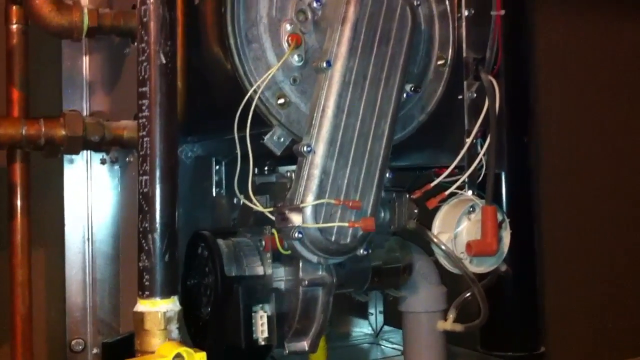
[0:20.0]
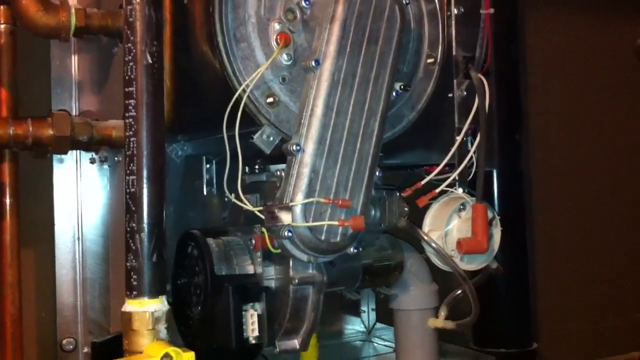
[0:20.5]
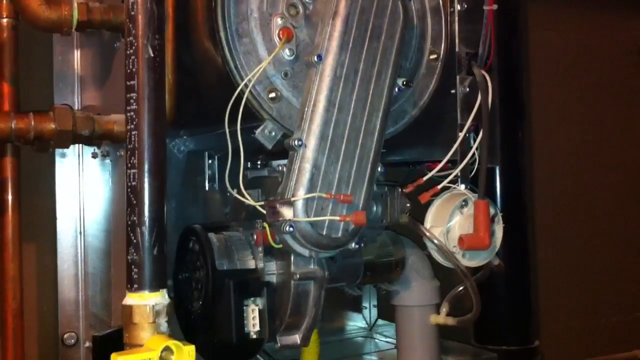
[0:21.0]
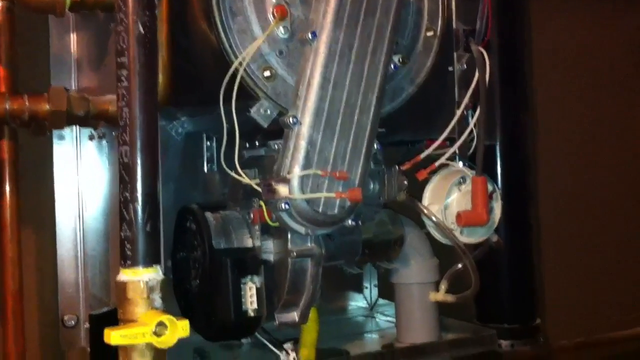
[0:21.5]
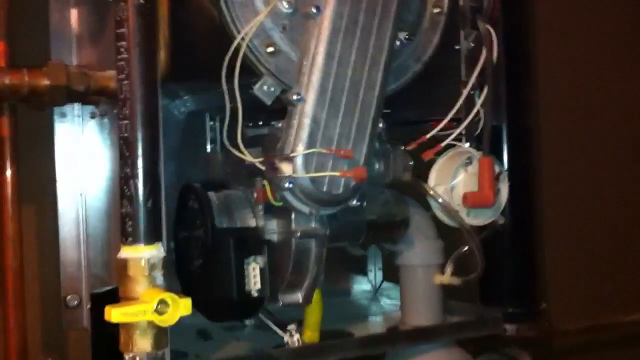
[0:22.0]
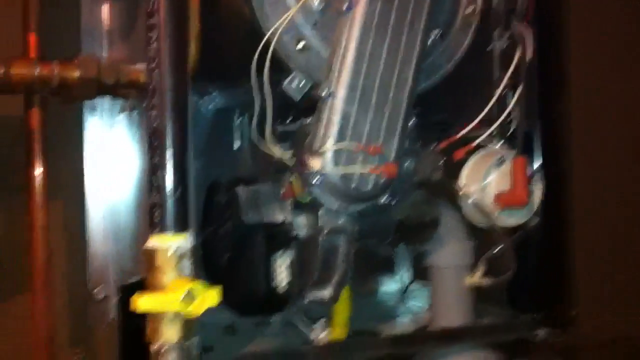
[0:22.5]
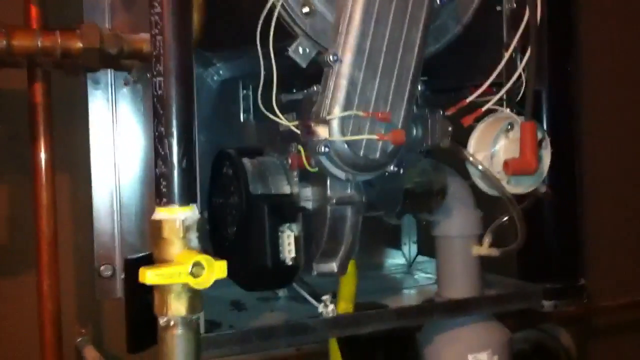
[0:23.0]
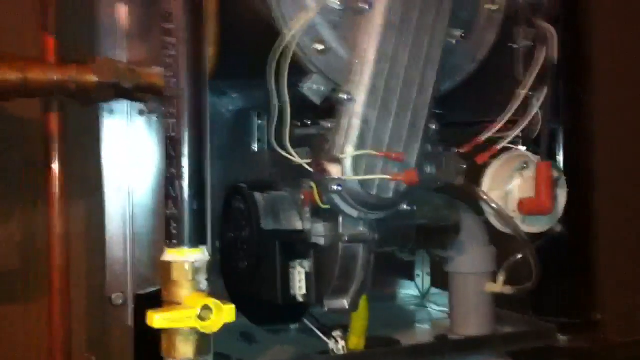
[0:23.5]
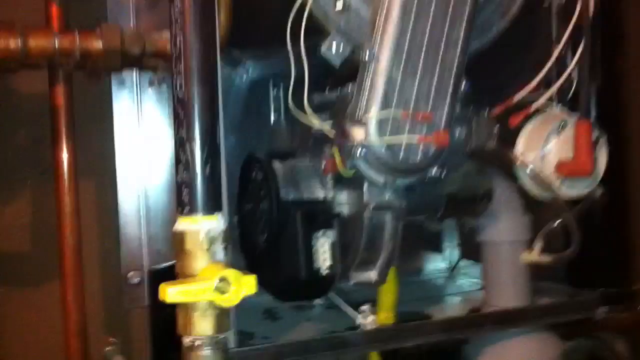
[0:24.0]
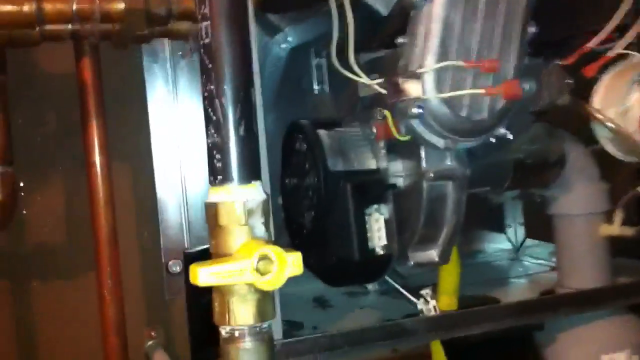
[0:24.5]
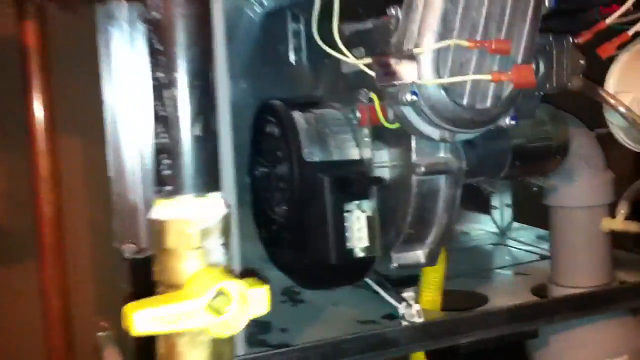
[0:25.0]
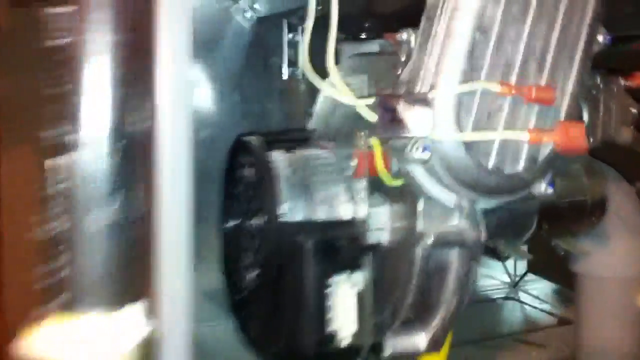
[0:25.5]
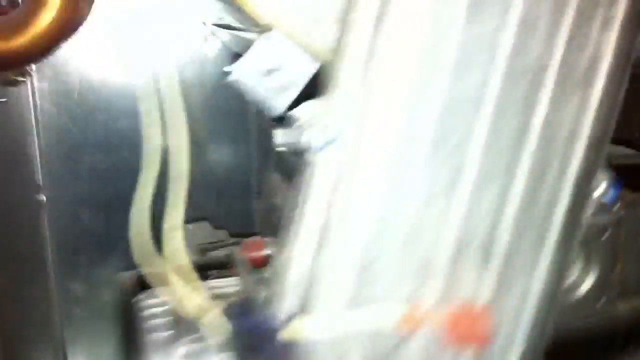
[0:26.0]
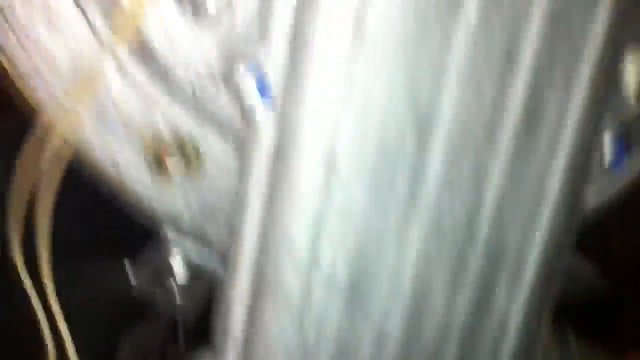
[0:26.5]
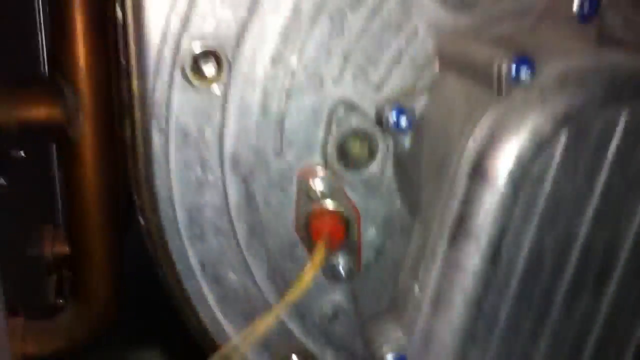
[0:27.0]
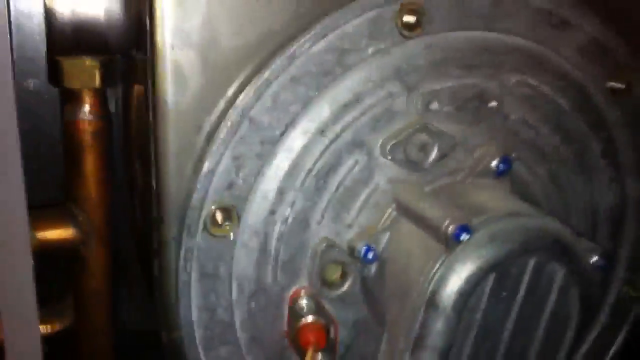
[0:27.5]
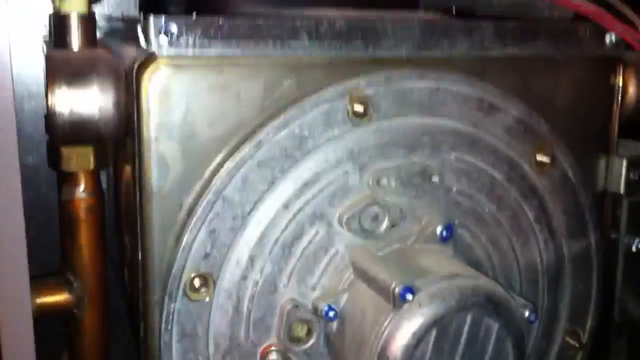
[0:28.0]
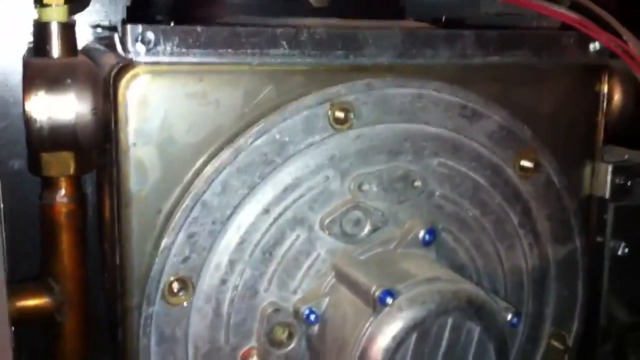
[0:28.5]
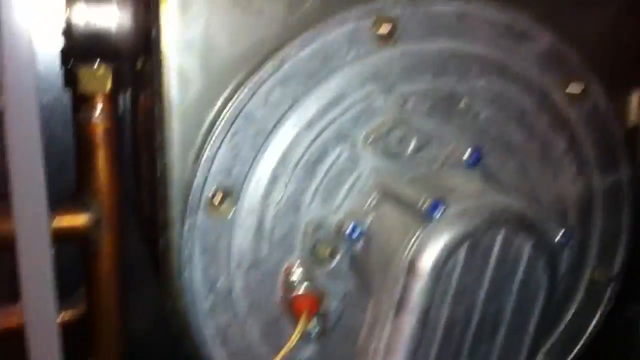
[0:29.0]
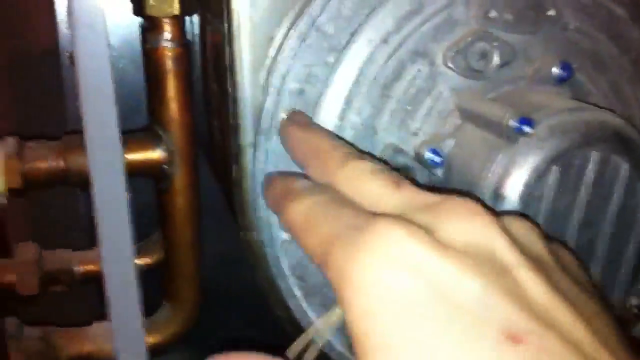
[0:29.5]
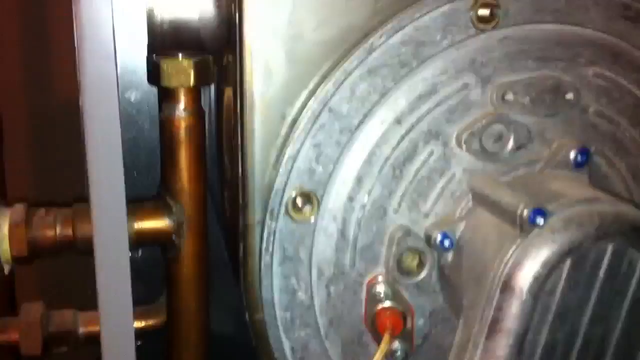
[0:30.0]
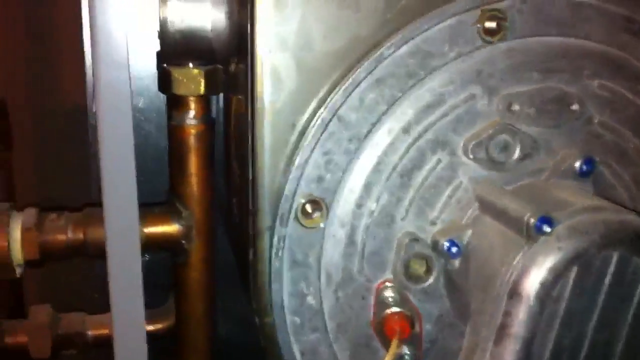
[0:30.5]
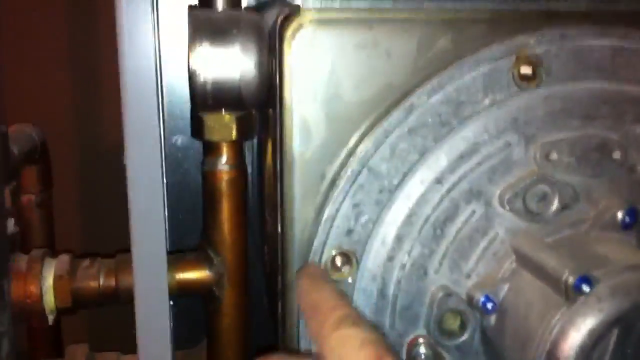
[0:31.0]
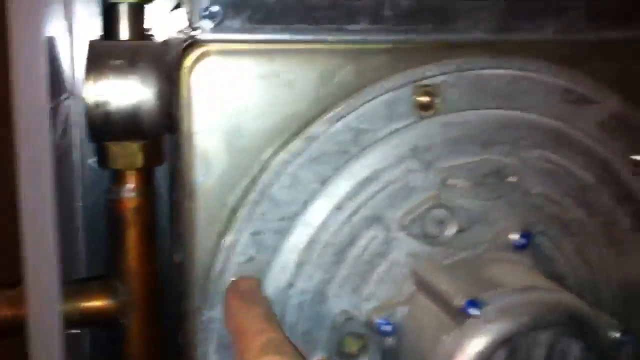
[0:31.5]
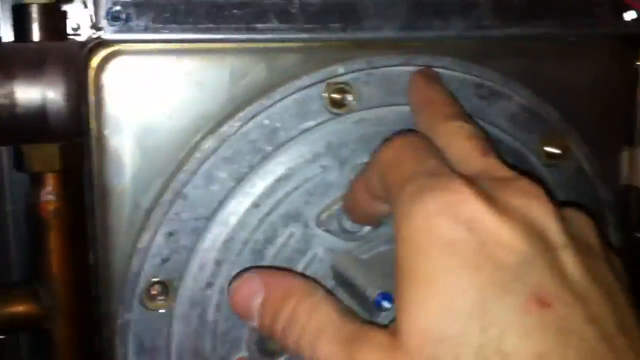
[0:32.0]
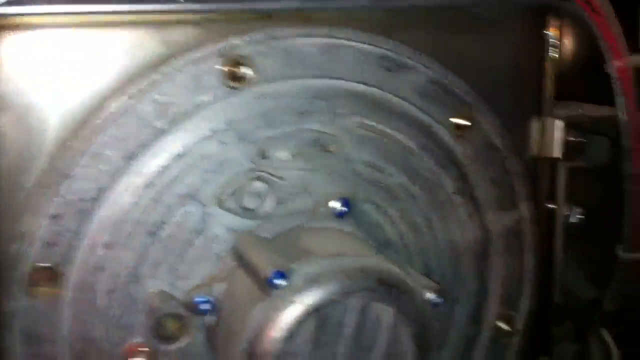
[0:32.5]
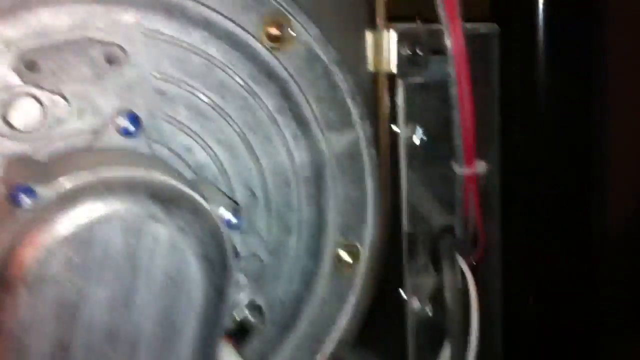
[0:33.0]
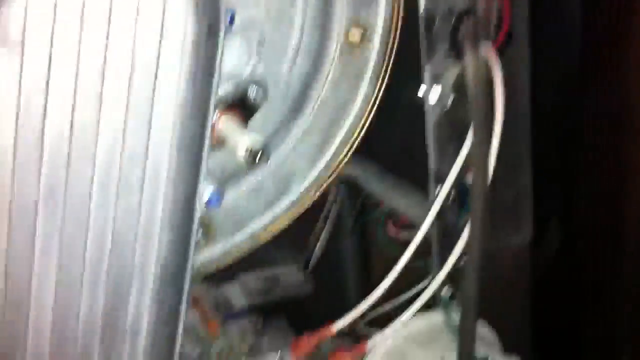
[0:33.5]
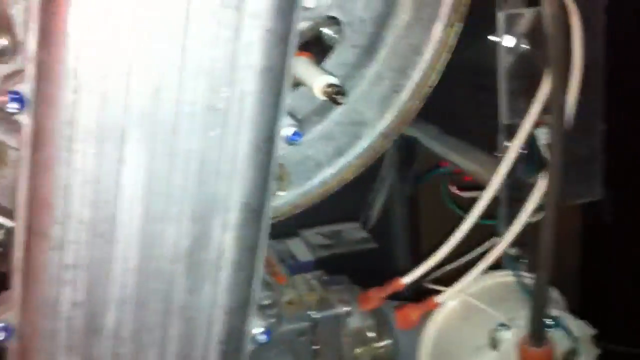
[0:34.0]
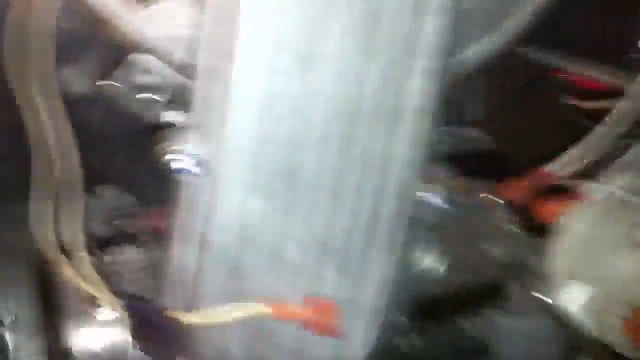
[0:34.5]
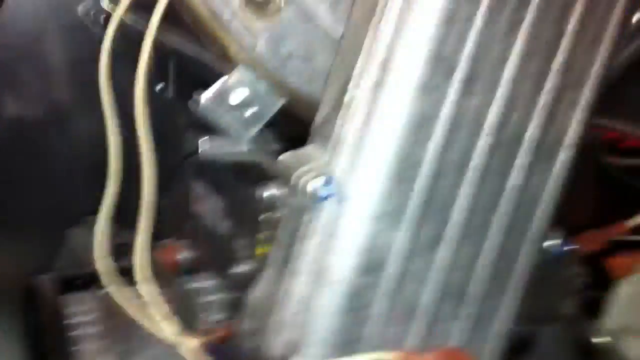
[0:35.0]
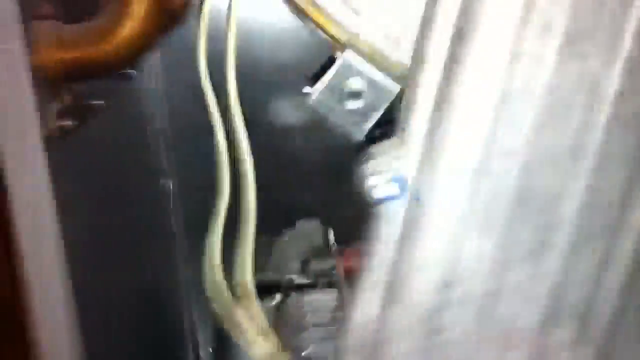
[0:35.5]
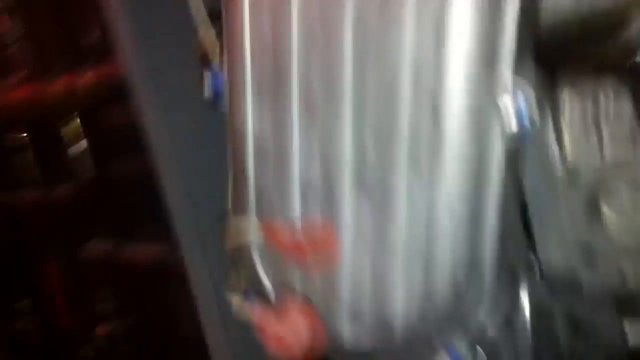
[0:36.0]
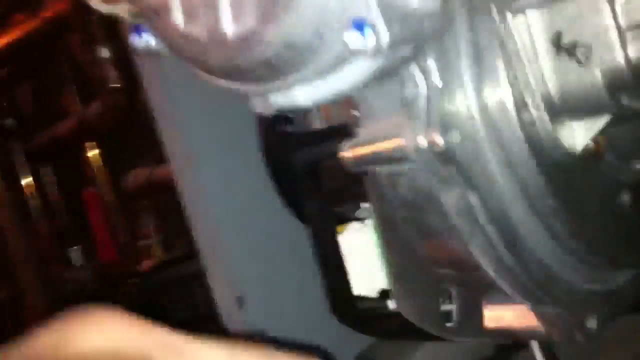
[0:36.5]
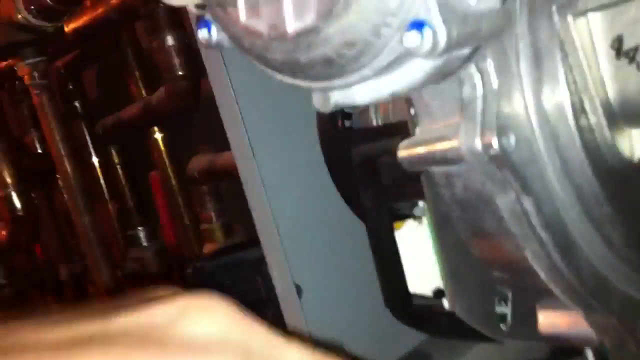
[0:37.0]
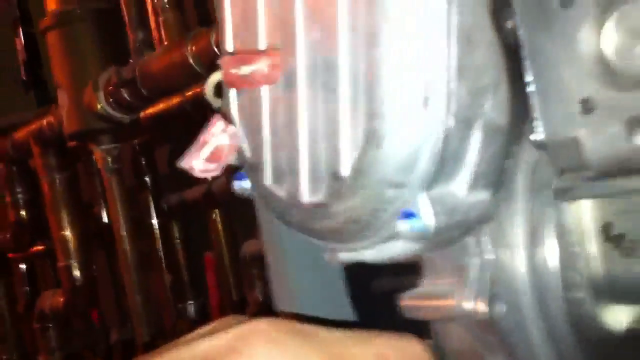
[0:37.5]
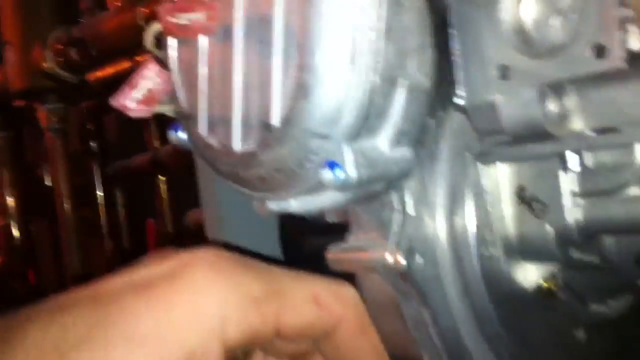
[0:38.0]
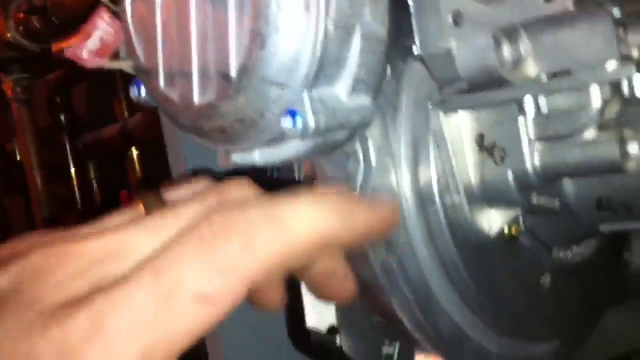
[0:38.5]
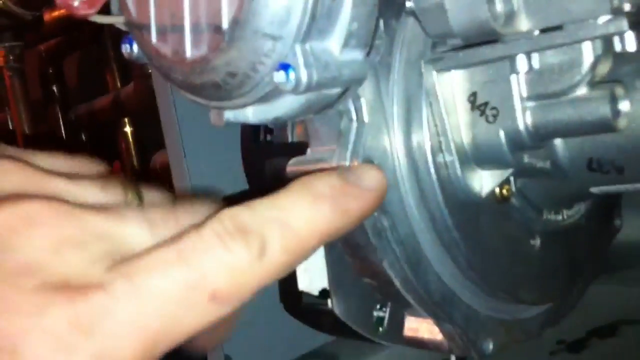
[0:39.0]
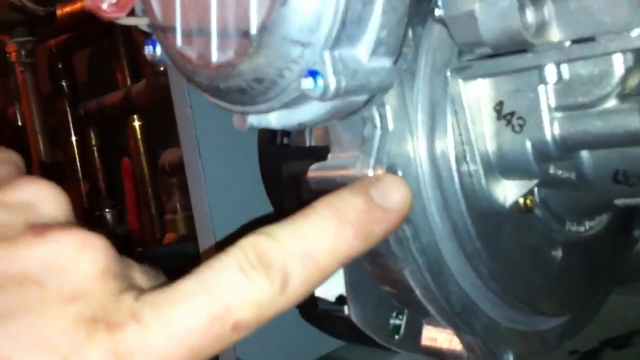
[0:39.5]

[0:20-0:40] The view still shows a lot of pipes, metal, wires and pressure meters. The camera zooms in on one of the machines, showing a lot of silver, little wires, bolts and nuts. A hand appears, apparently a white Caucasian hand, and someone seems to be shining a flashlight at this machine. They point at the bolts, look over the wiring, and touch the silver metal part.